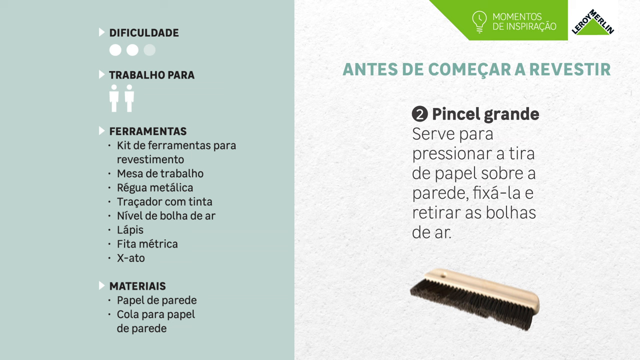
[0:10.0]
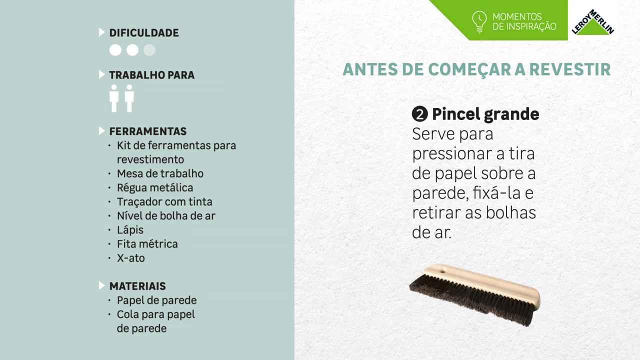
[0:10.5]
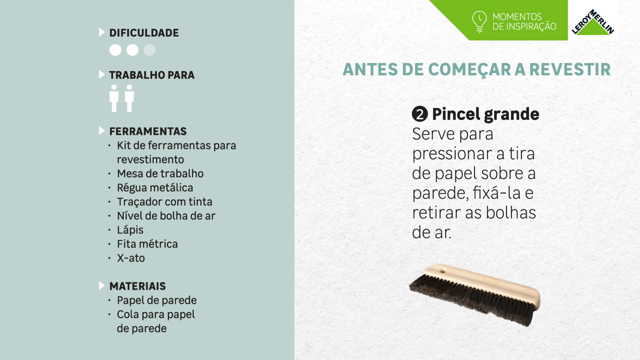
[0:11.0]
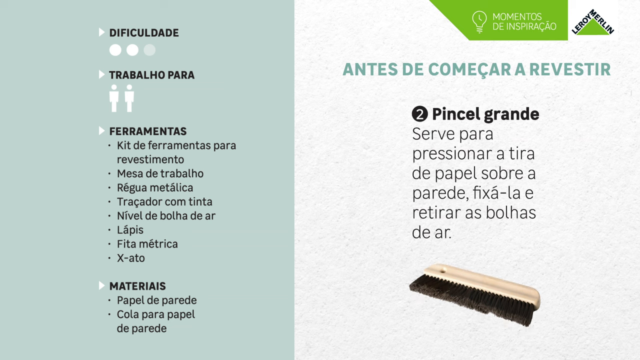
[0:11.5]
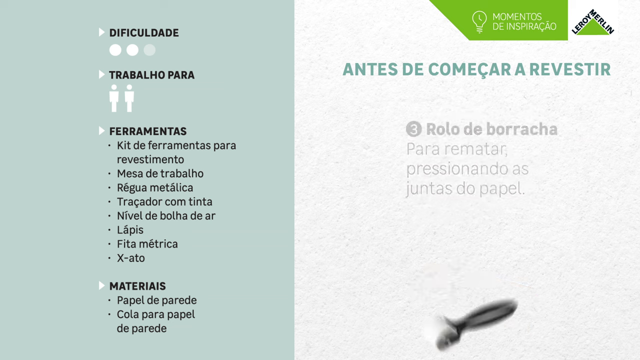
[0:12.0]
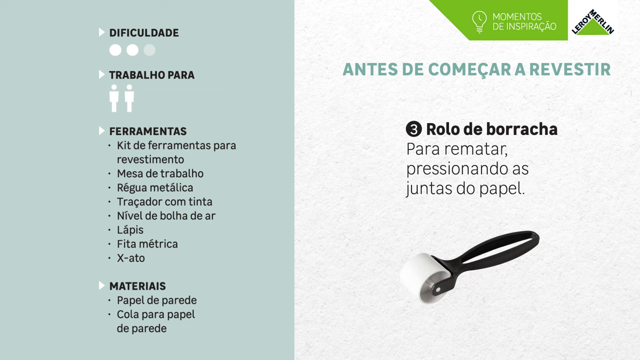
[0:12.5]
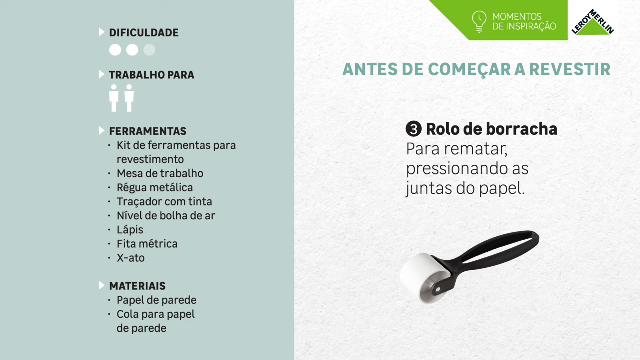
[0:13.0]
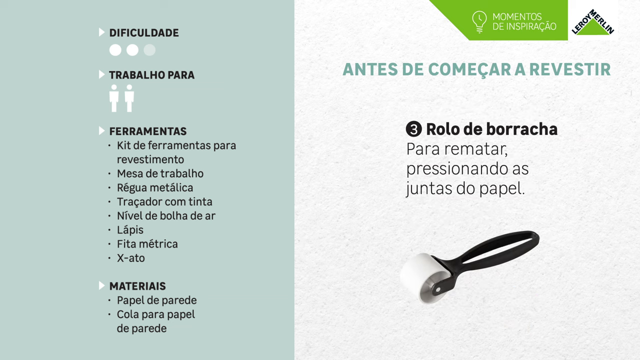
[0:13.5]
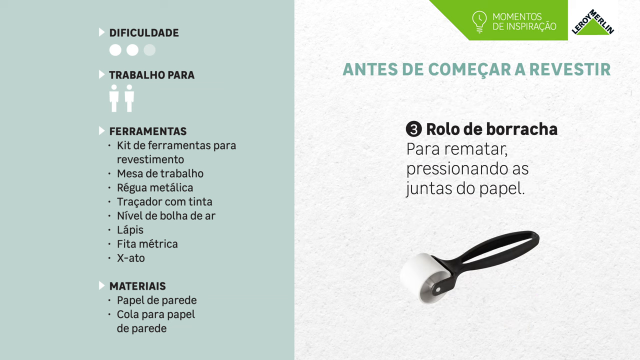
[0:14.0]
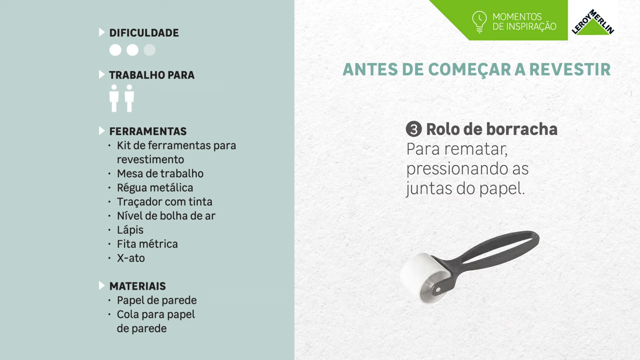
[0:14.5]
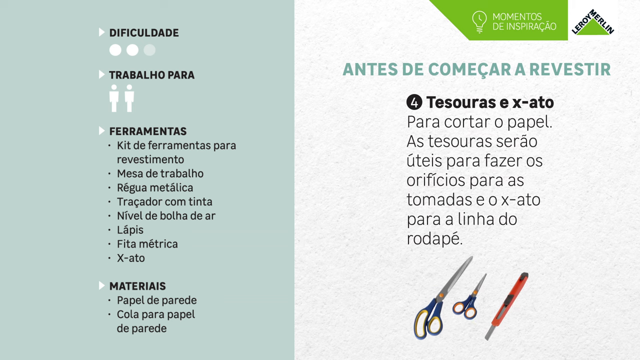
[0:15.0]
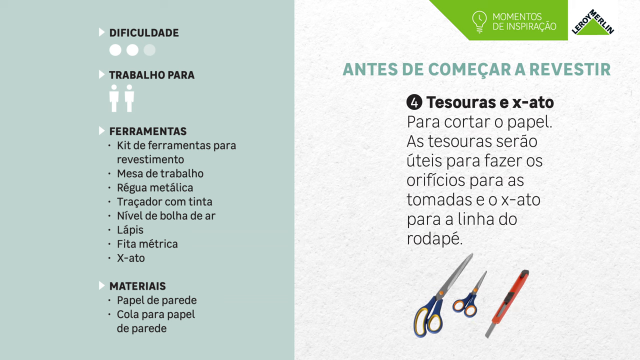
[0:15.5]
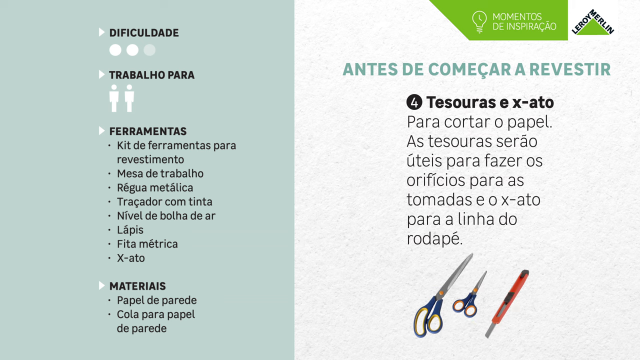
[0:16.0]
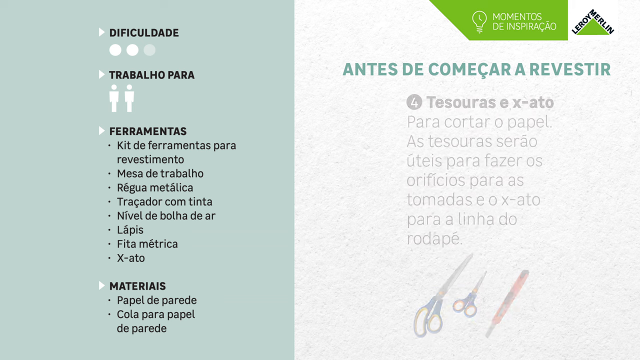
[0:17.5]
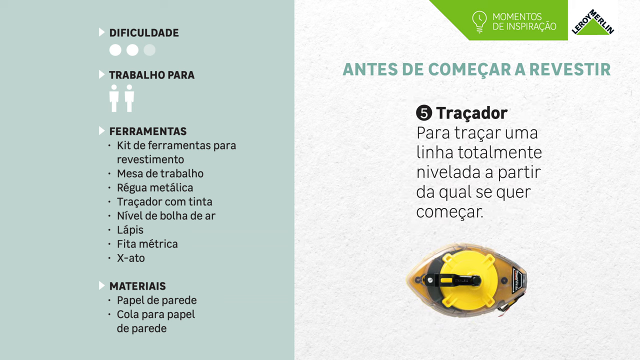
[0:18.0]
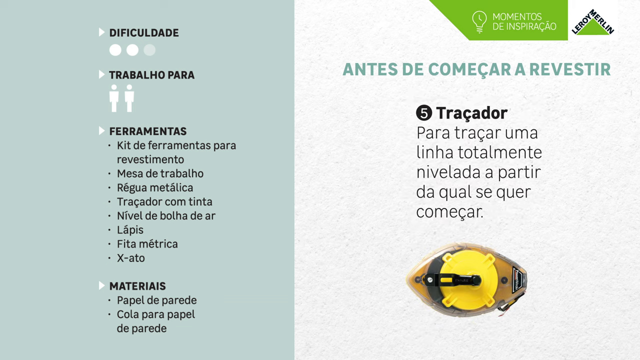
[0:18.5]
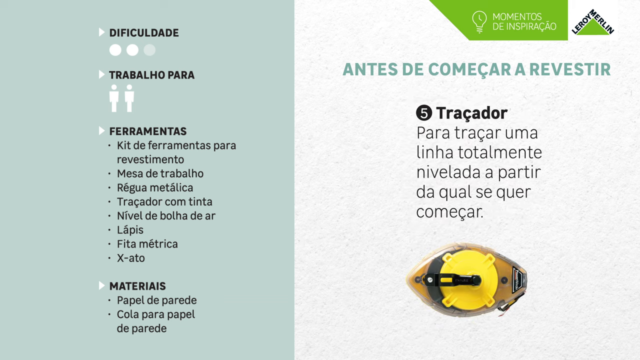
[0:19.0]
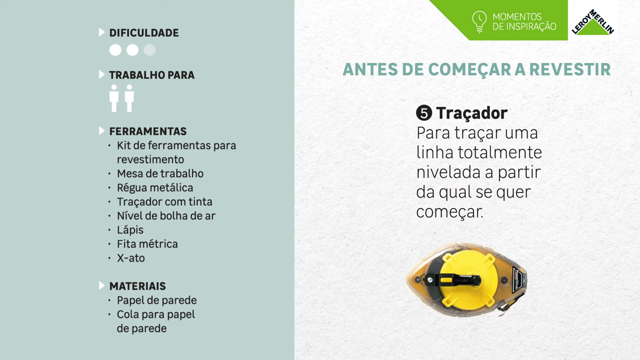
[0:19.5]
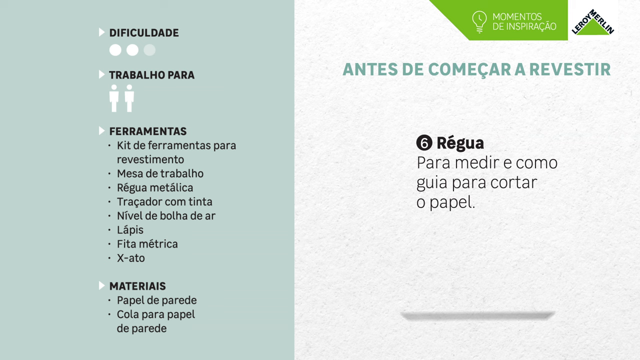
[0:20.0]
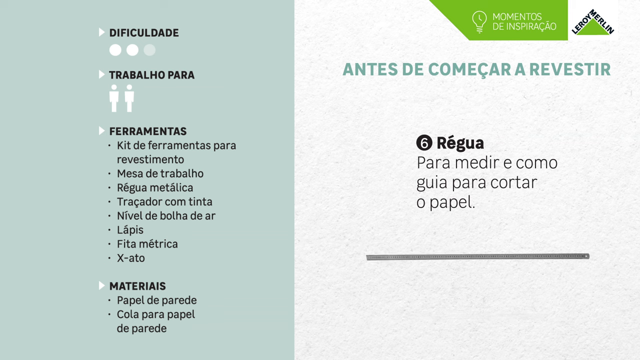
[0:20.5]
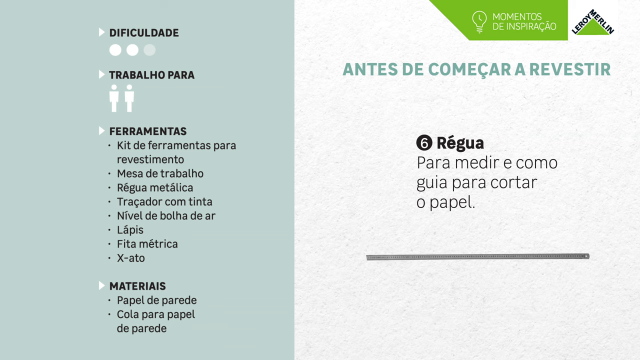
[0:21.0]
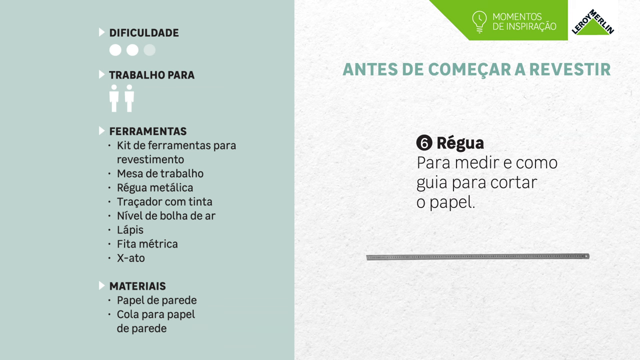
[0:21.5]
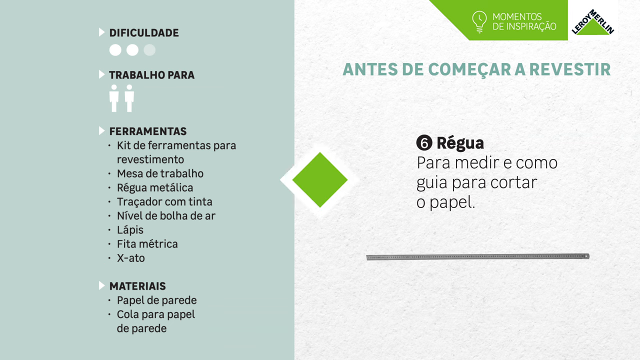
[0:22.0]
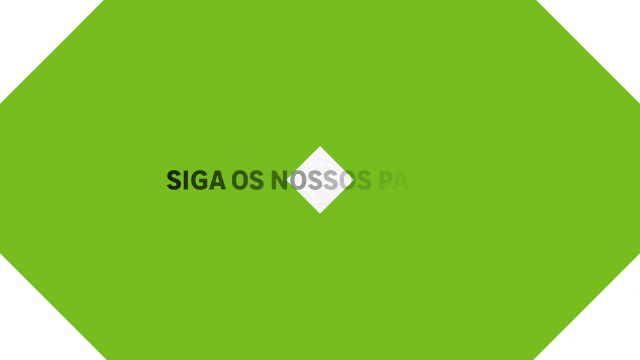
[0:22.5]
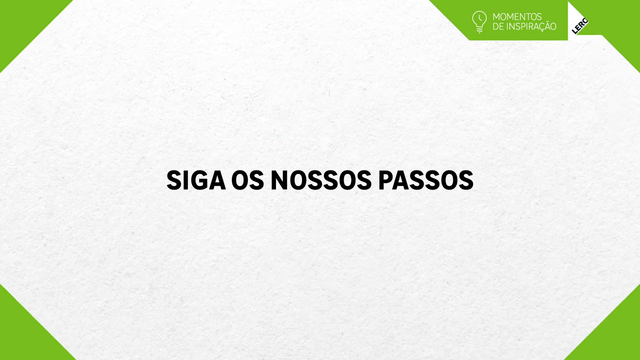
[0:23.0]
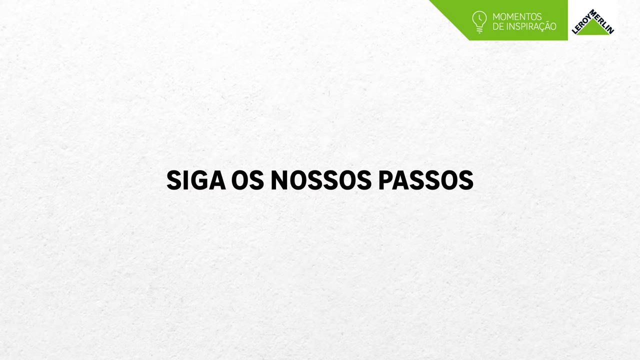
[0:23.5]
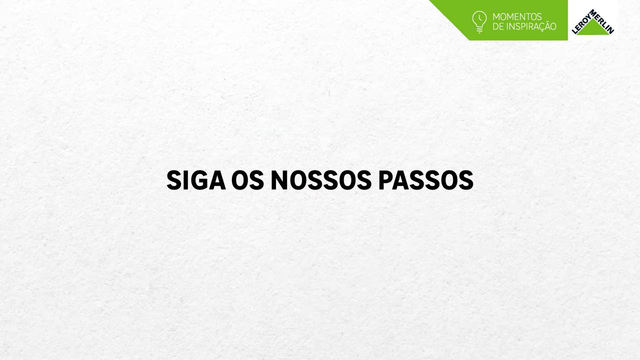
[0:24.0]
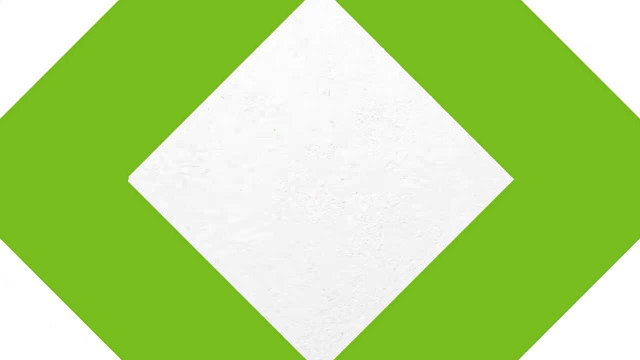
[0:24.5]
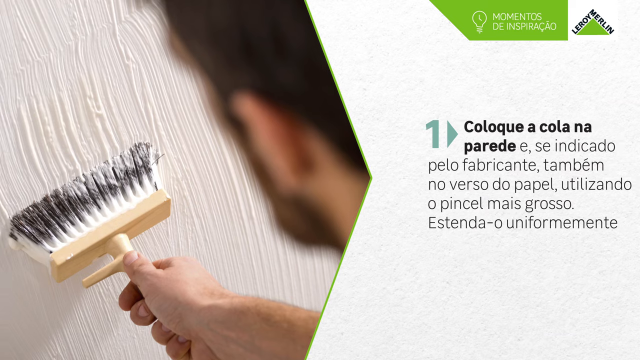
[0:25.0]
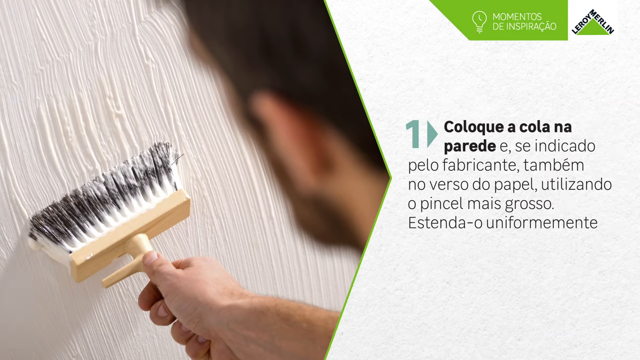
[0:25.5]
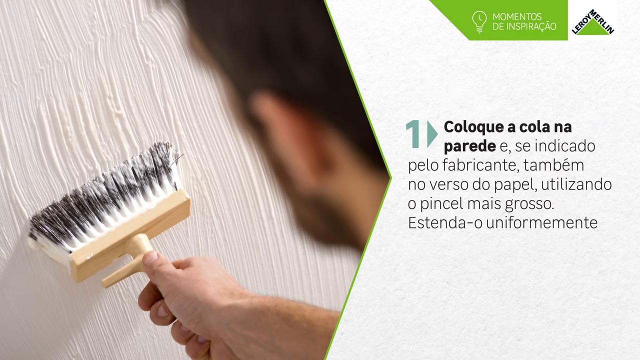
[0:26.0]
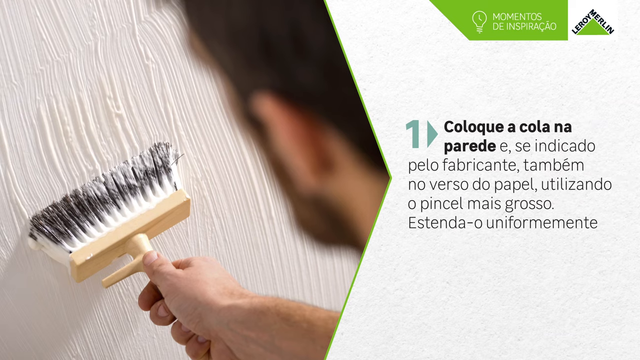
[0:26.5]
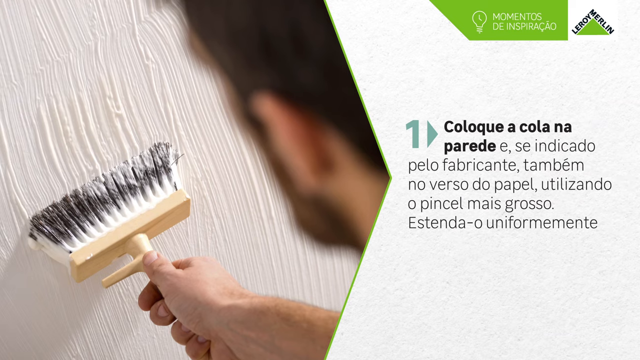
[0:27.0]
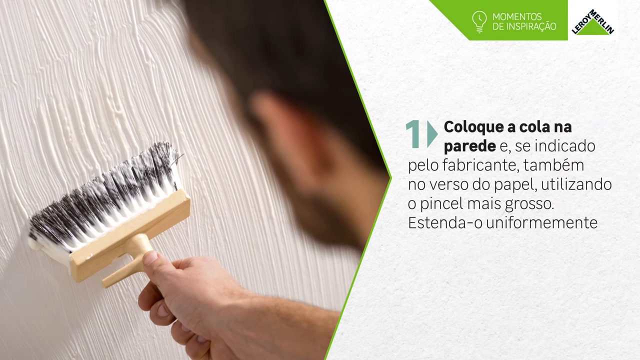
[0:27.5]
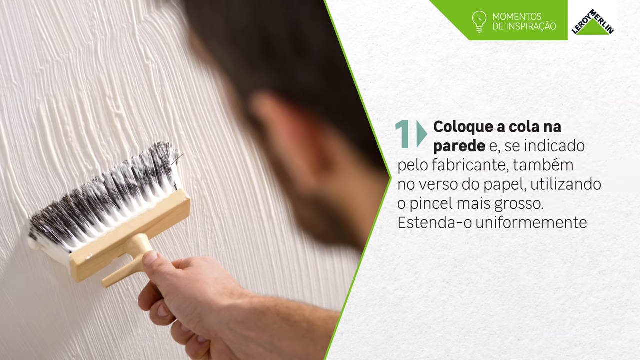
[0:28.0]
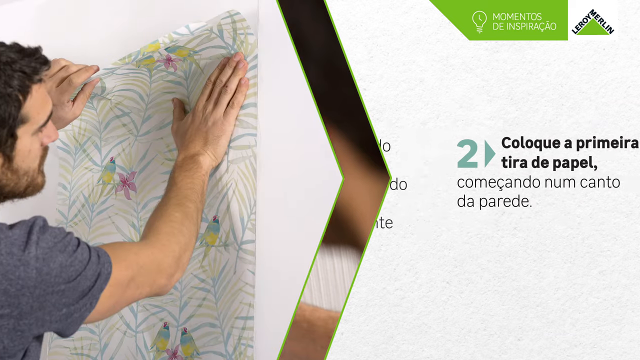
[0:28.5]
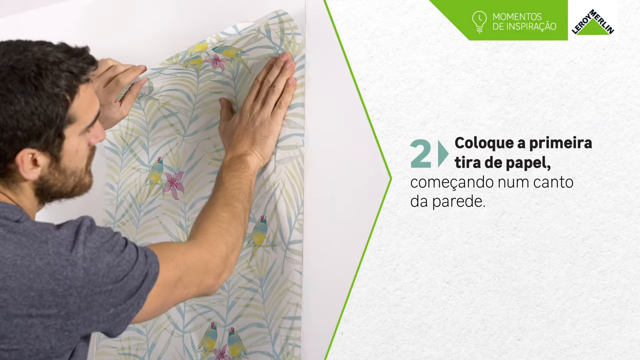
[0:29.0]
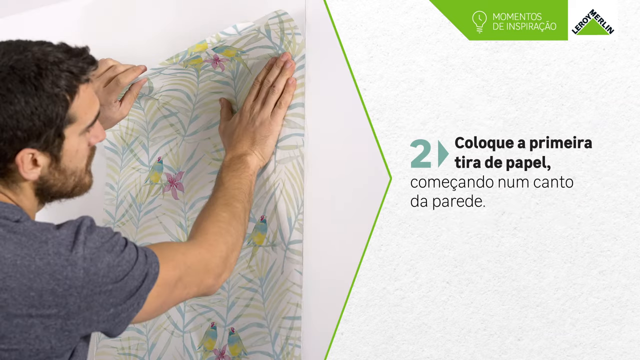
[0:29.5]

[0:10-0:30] The video shows the difficulty level, the materials and supplies needed, and how many people should be involved: preferably two. It shows a brush, then another, much thinner type of hardware brush, along with a roller, scissors, an exacto knife and a ruler. A list of the items appears on the left, with an image of each supply on the right. In Spanish, step one indicates that some sort of primer or lacquer goes onto the wall before the wallpaper, and step two shows measuring the wallpaper based on the corners of the room and lining it up. The beginning of the wallpaper installation is shown.